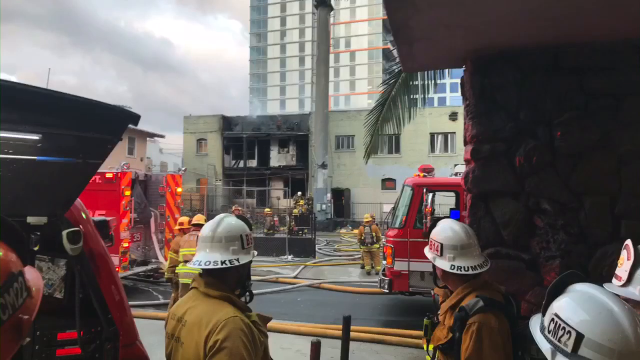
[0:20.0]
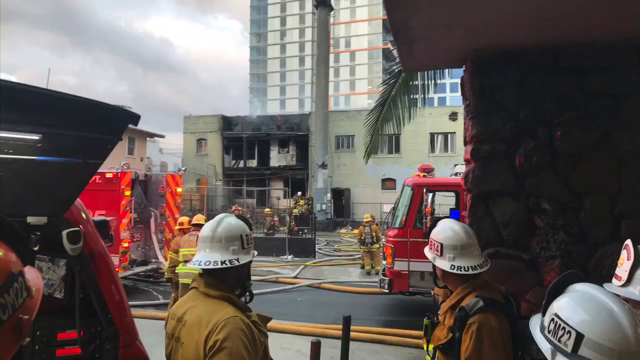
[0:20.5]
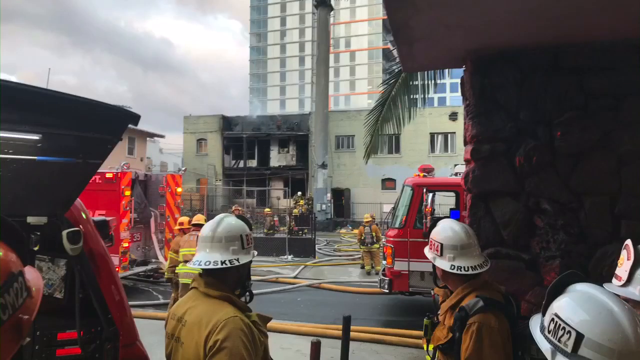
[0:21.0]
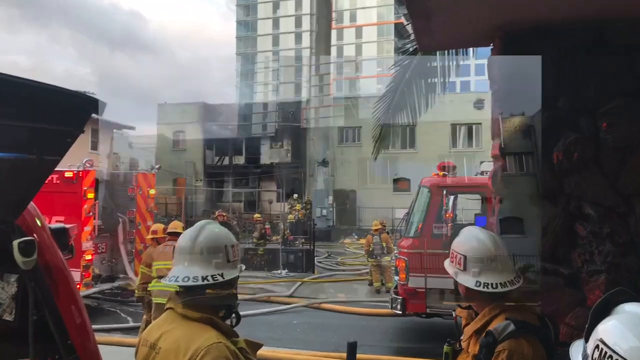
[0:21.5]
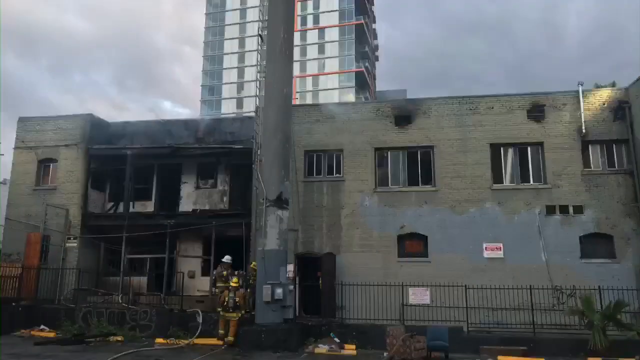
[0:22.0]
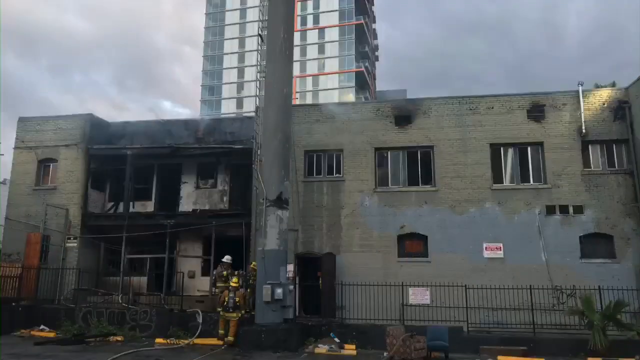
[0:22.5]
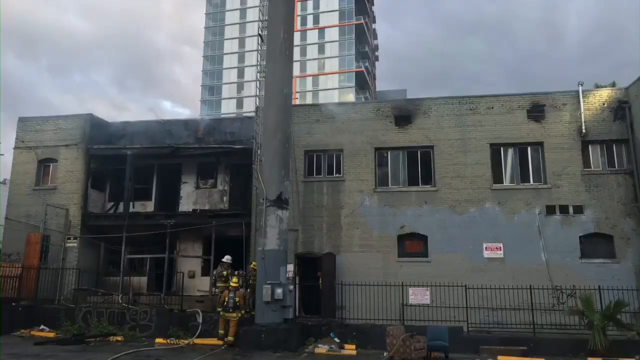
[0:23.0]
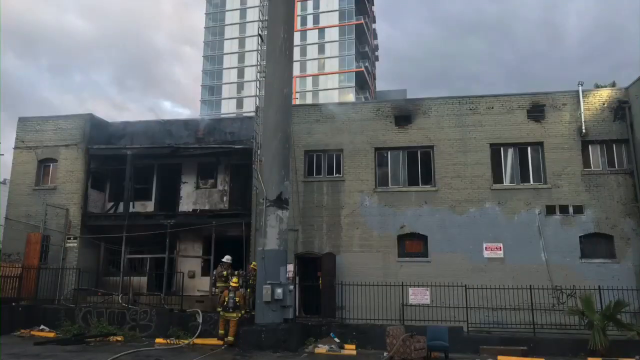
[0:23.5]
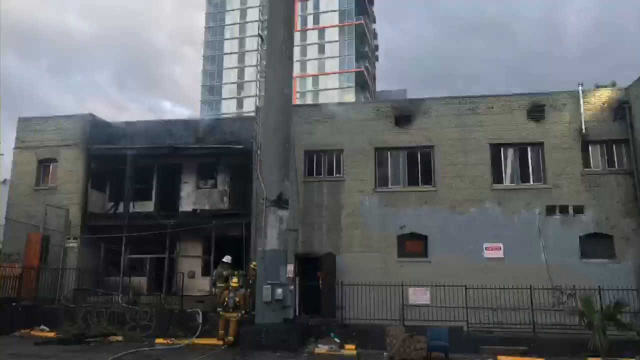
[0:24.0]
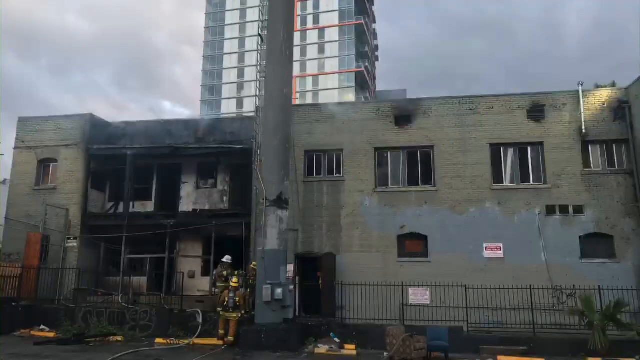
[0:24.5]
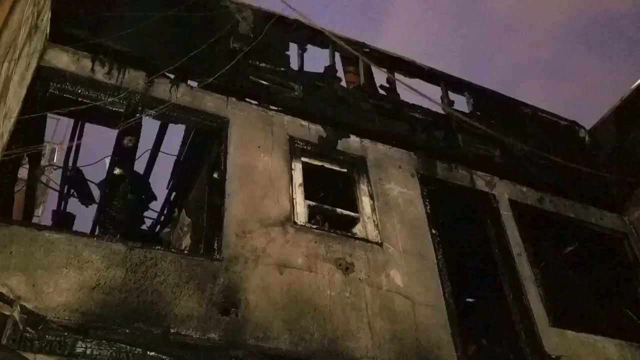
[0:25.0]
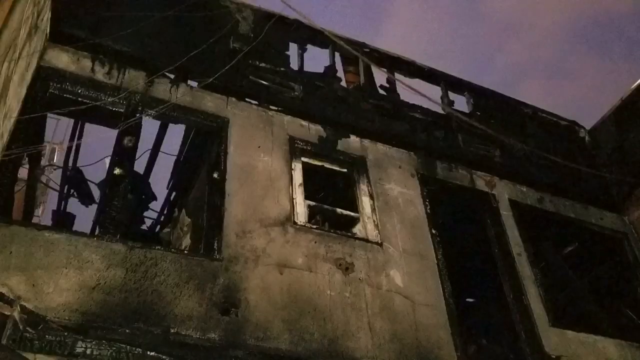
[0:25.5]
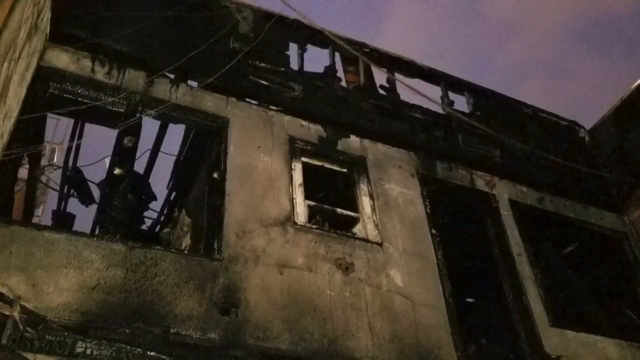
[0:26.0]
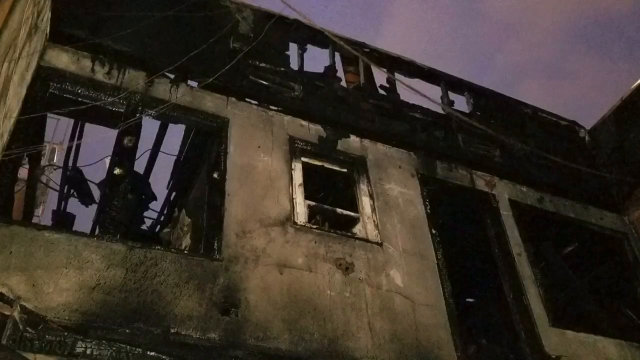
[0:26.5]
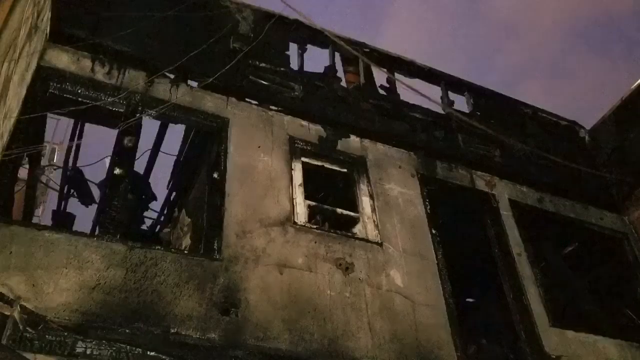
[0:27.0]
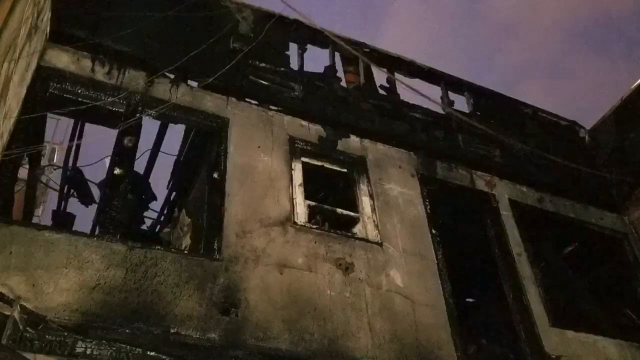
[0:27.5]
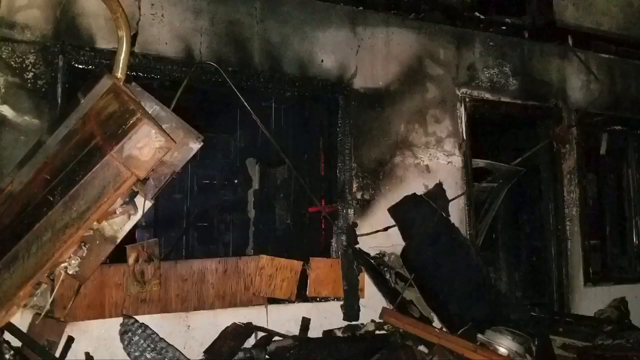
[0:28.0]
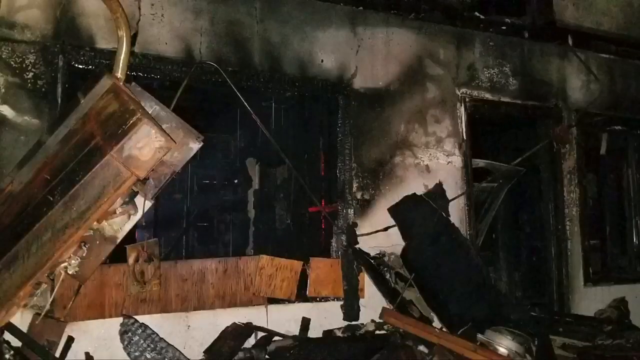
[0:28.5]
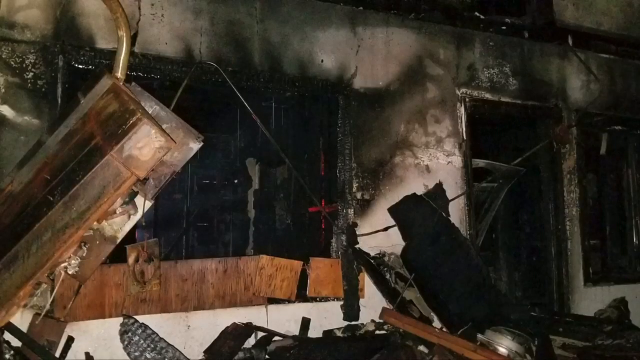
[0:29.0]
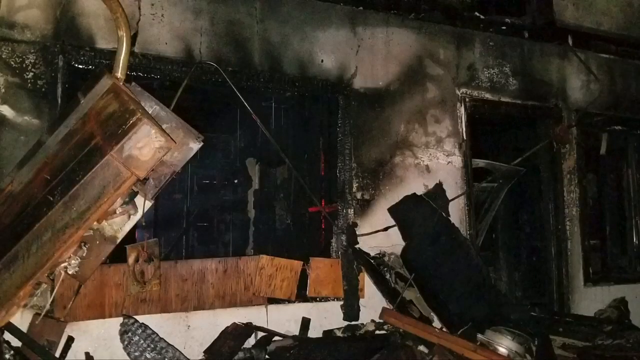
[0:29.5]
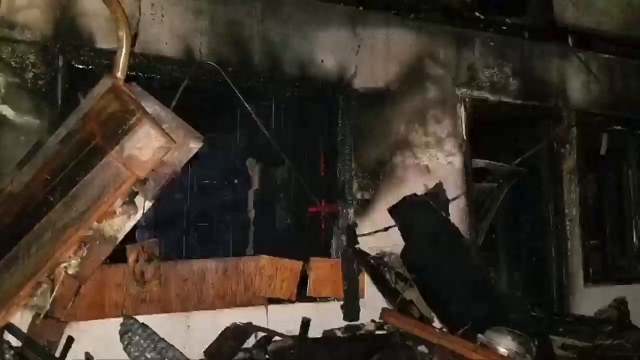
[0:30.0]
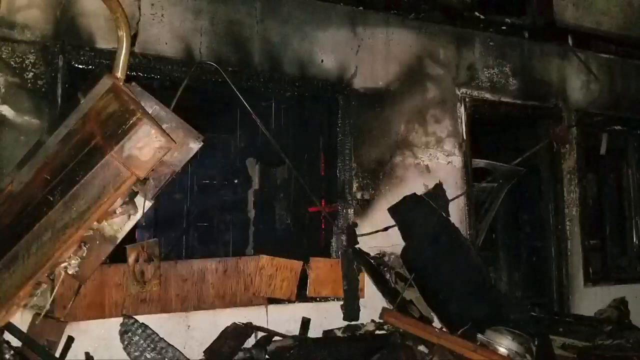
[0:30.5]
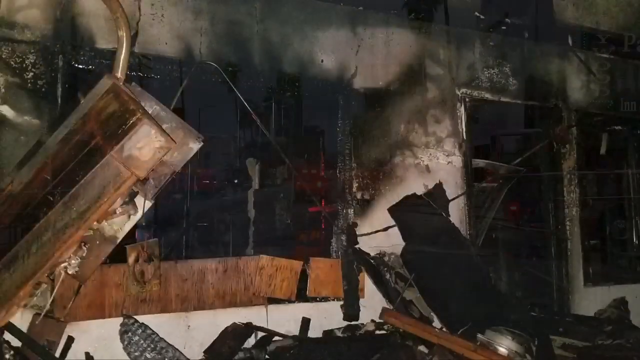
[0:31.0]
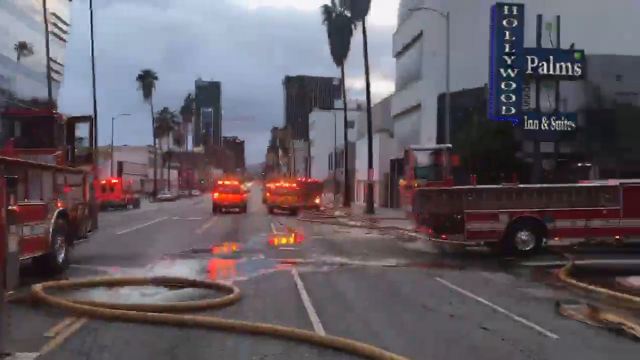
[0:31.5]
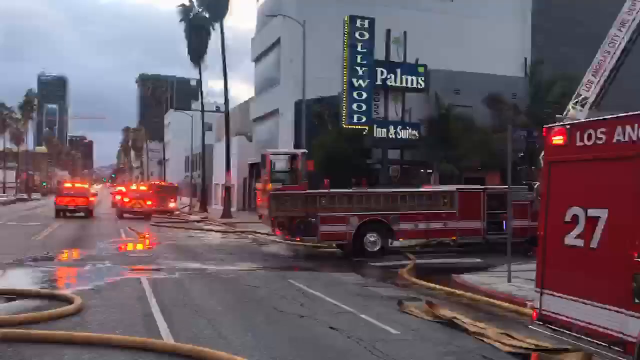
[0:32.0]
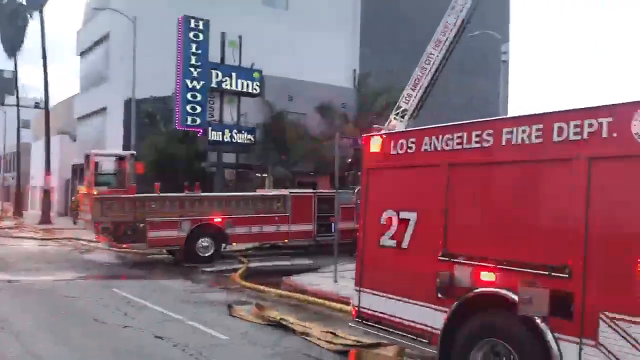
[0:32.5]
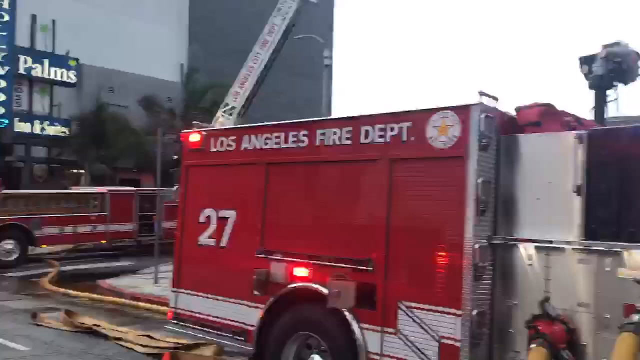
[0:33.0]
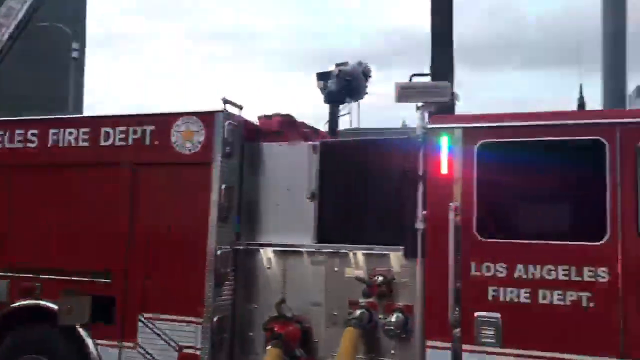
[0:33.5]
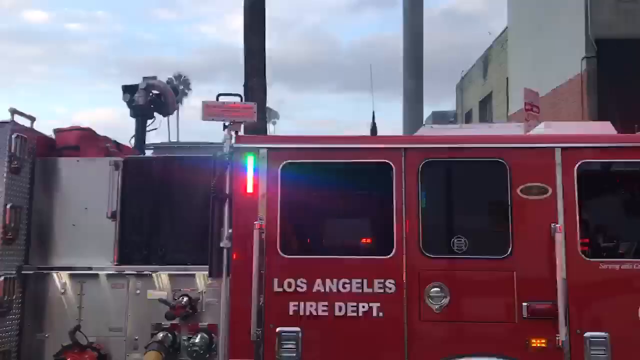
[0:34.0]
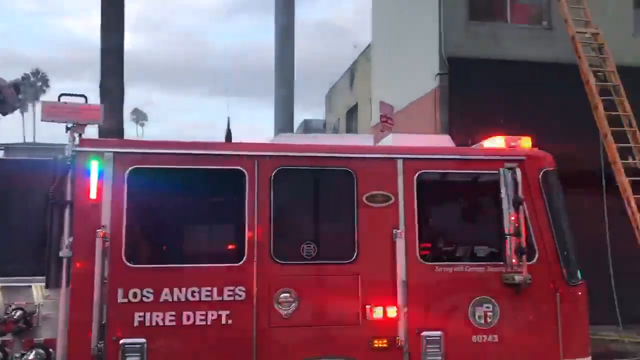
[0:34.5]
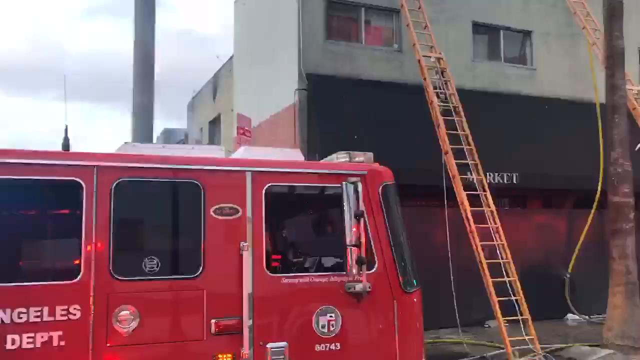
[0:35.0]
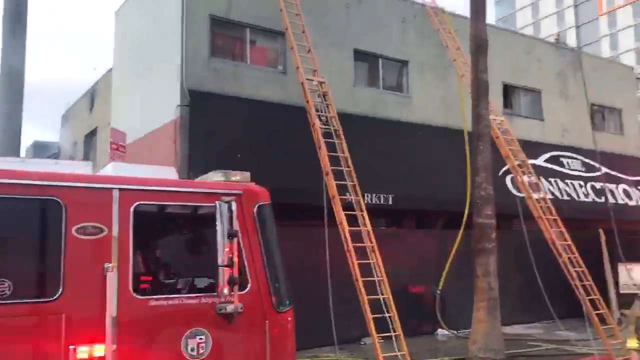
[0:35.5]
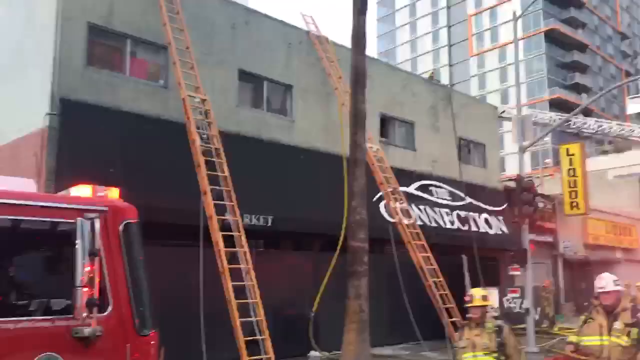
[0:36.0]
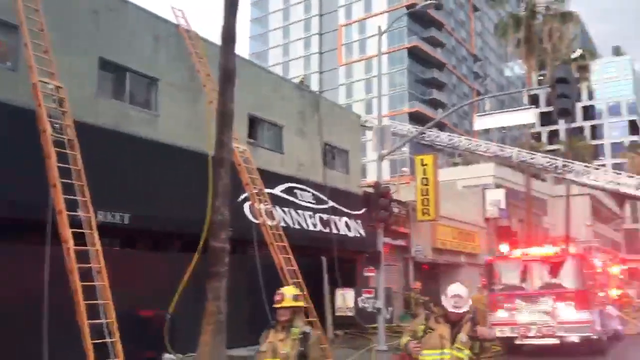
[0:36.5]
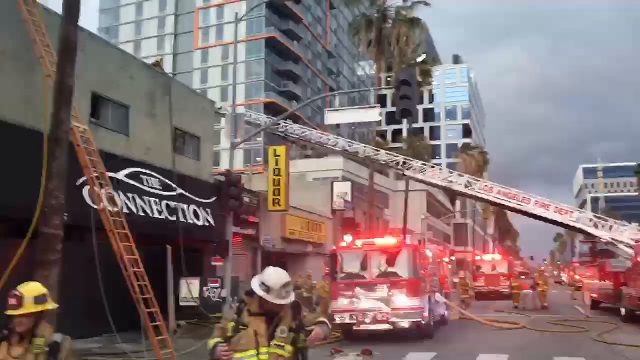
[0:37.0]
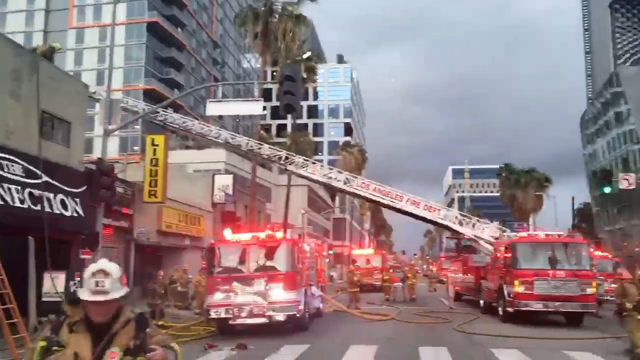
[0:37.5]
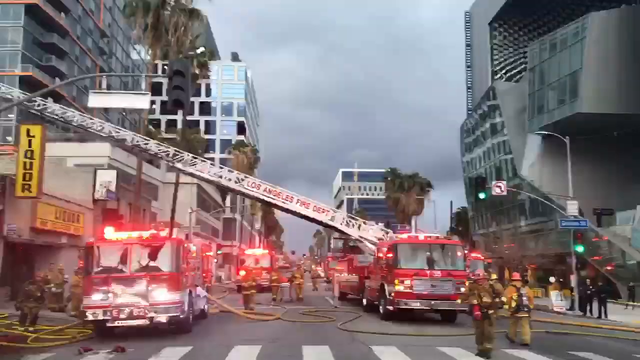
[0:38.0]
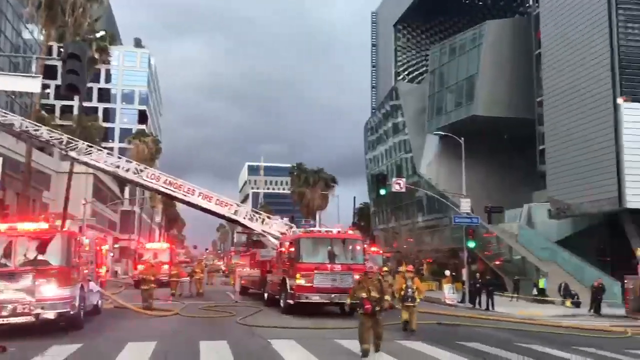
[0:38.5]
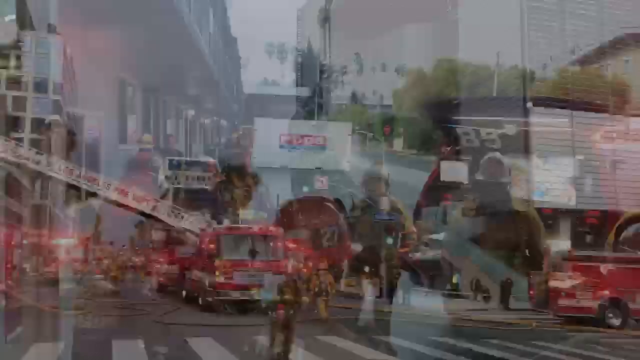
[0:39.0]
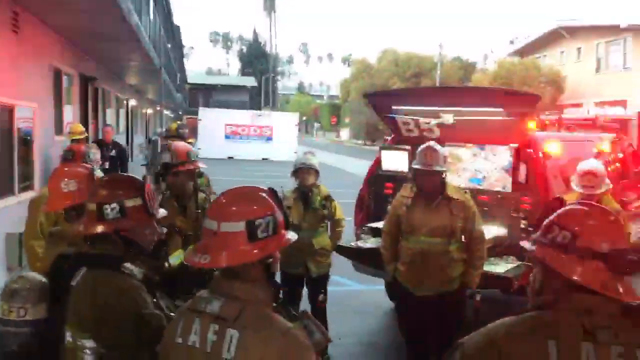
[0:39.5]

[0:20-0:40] The building has burnt. All of its windows are shattered, the structure is not stable, and all the paint has burnt off, leaving heavy damage. The firefighters are standing at a distance from the building.